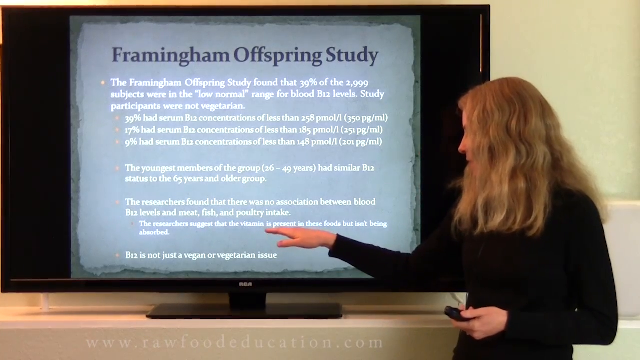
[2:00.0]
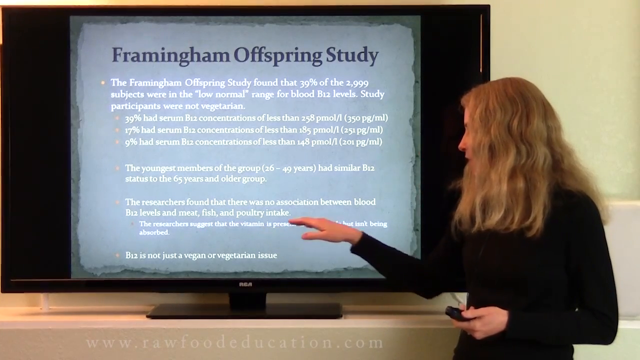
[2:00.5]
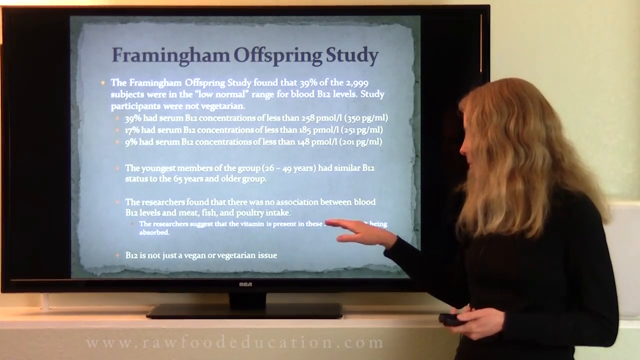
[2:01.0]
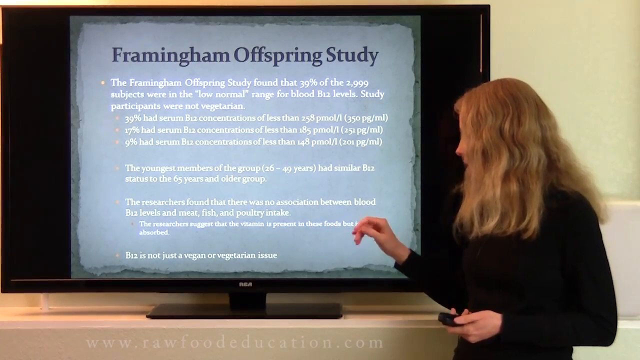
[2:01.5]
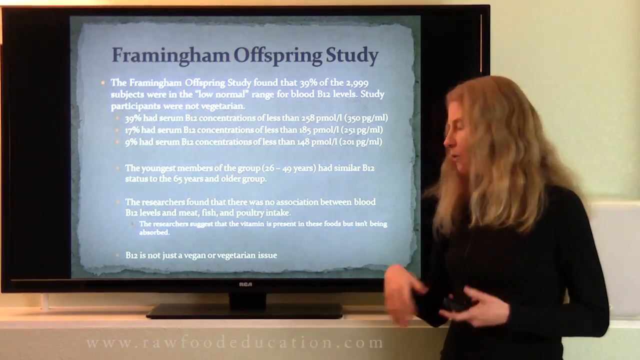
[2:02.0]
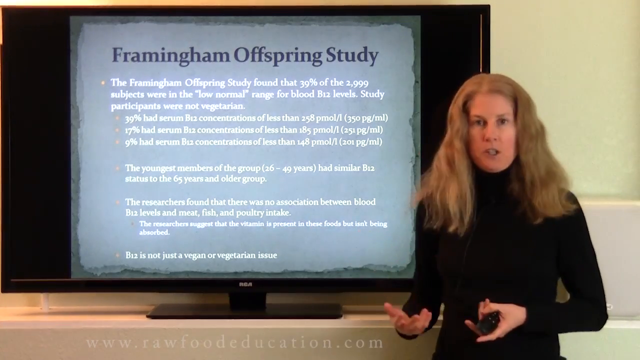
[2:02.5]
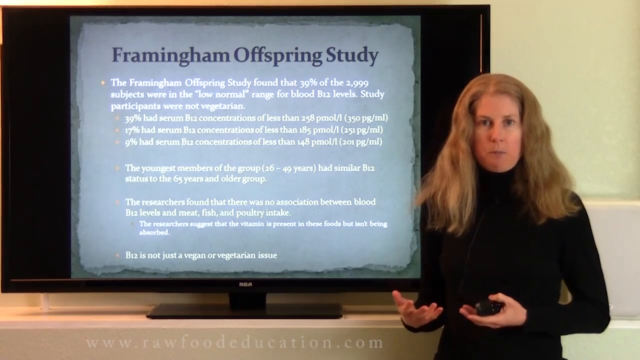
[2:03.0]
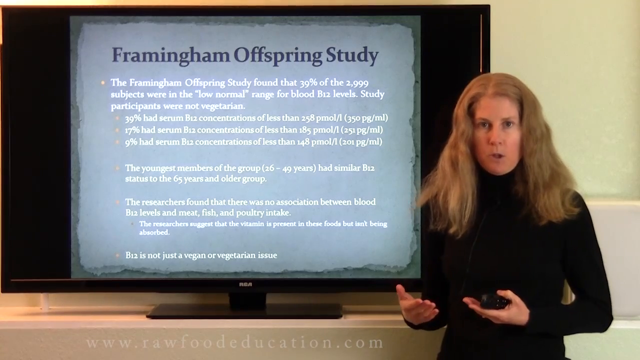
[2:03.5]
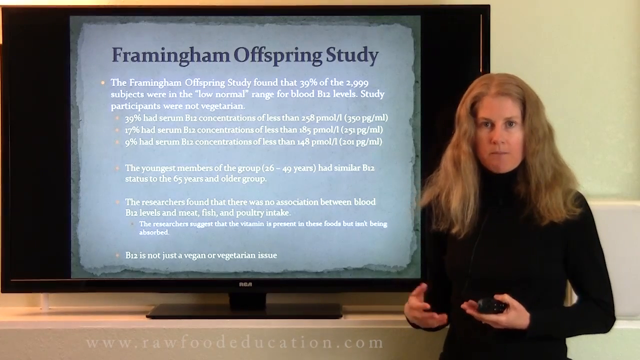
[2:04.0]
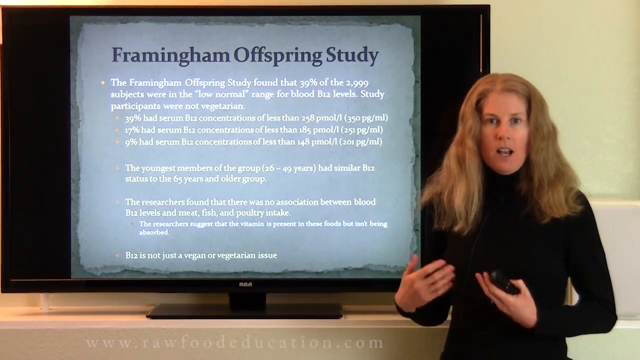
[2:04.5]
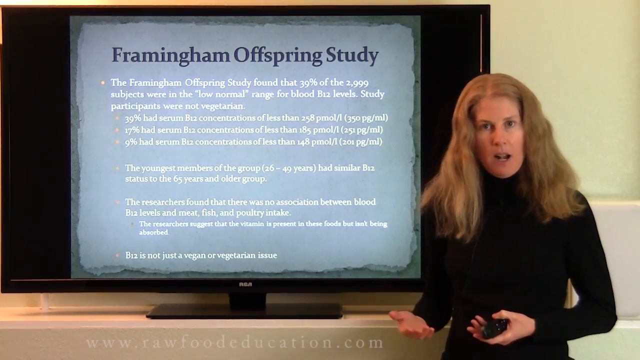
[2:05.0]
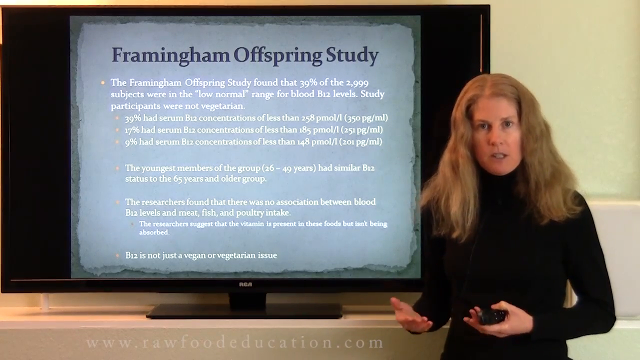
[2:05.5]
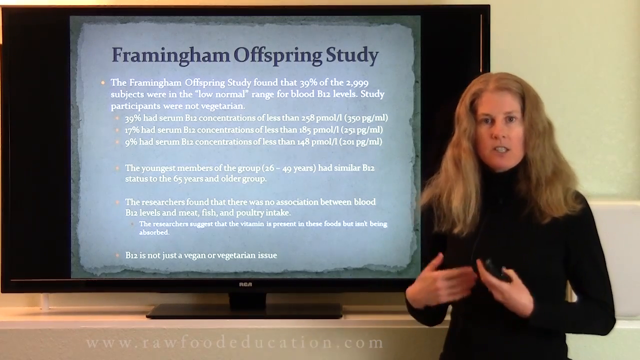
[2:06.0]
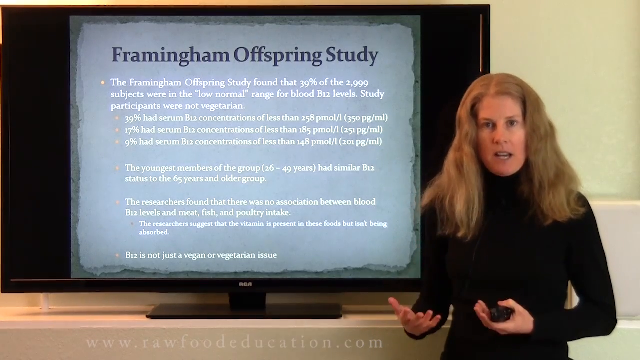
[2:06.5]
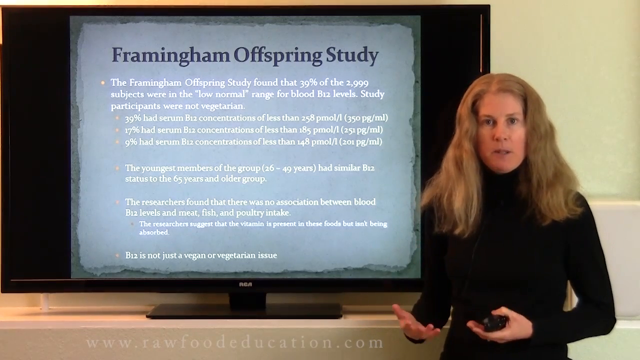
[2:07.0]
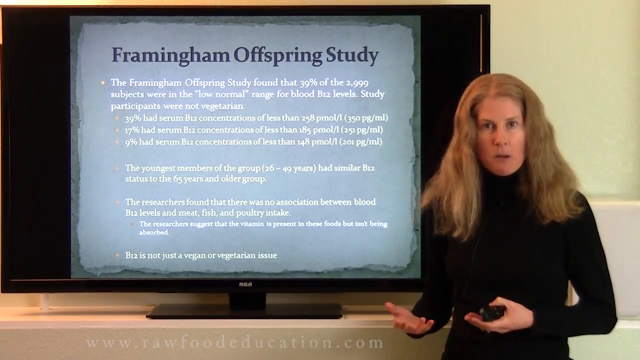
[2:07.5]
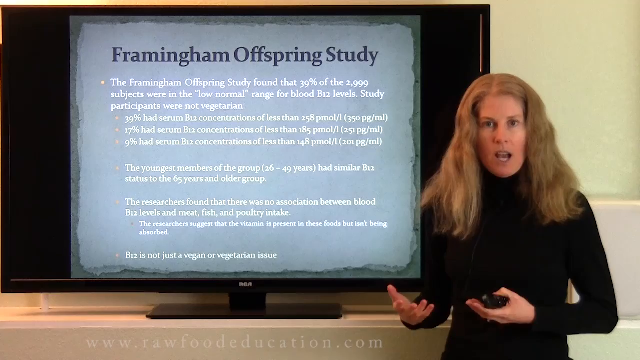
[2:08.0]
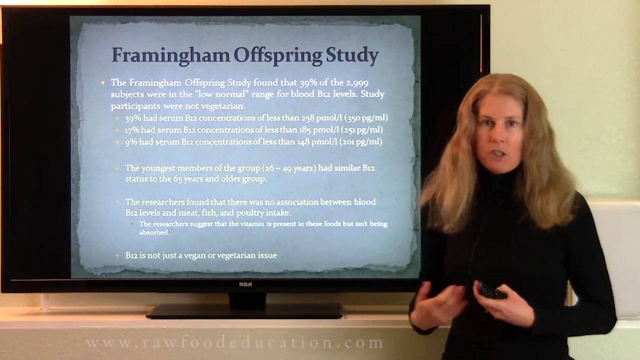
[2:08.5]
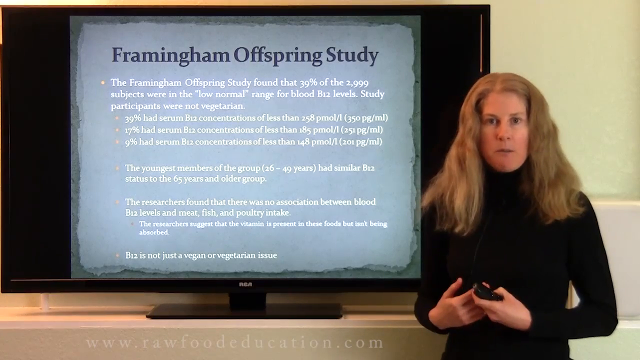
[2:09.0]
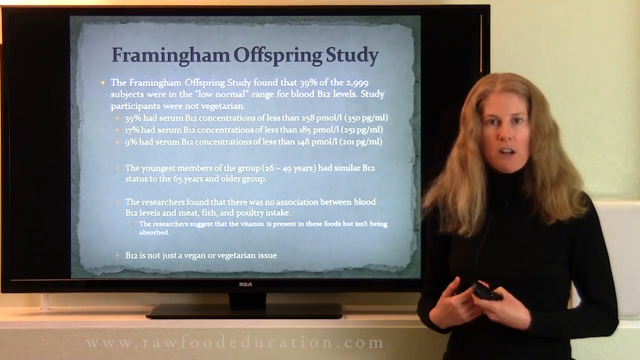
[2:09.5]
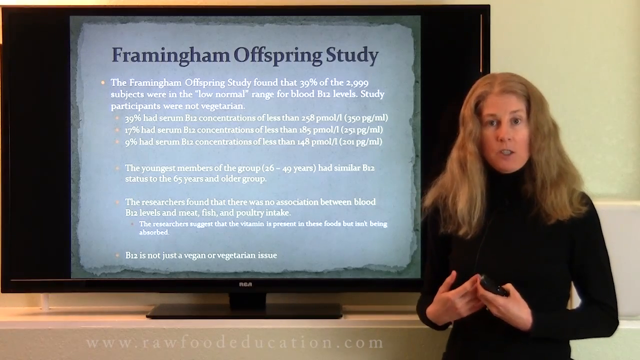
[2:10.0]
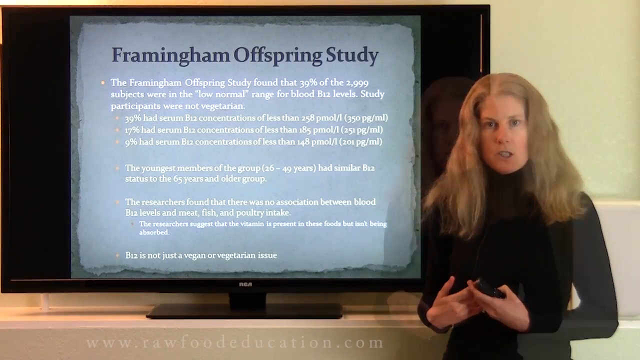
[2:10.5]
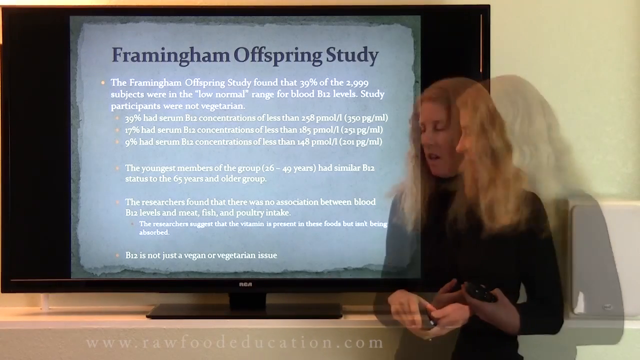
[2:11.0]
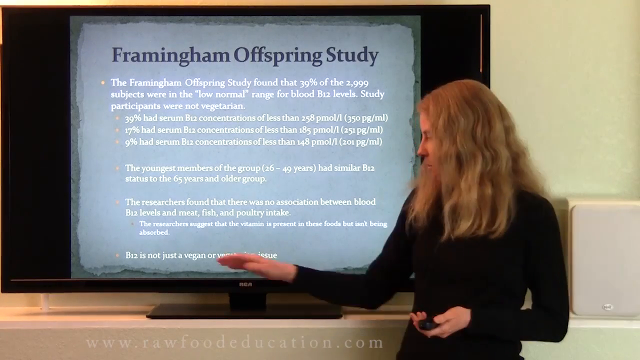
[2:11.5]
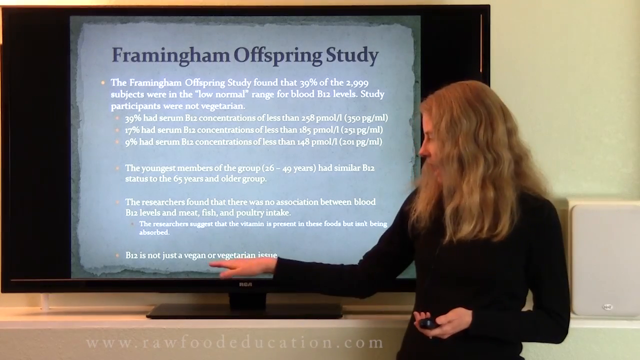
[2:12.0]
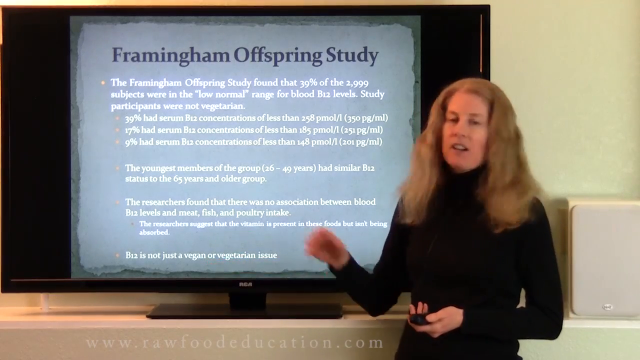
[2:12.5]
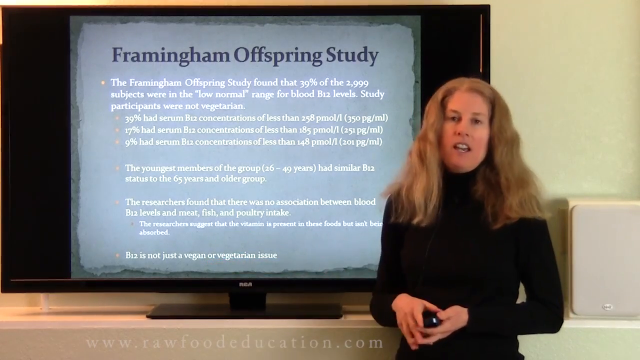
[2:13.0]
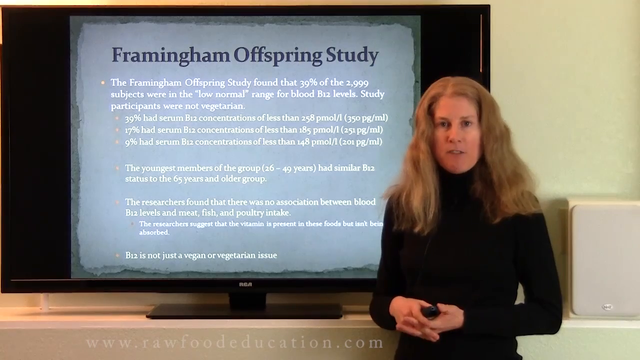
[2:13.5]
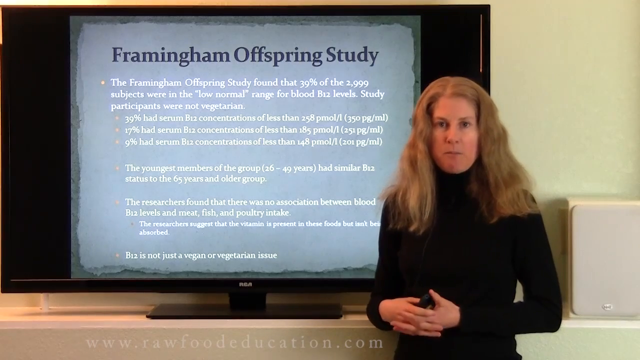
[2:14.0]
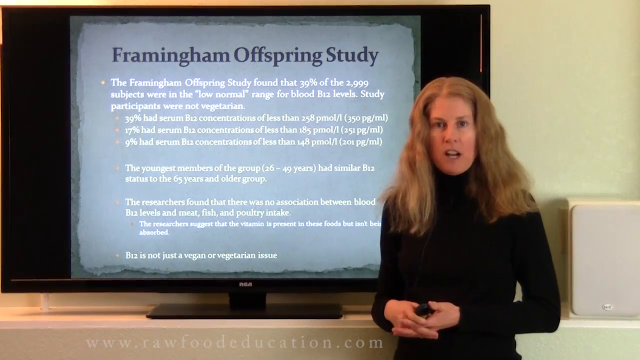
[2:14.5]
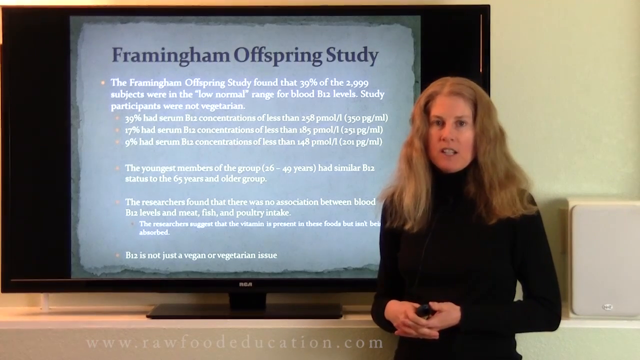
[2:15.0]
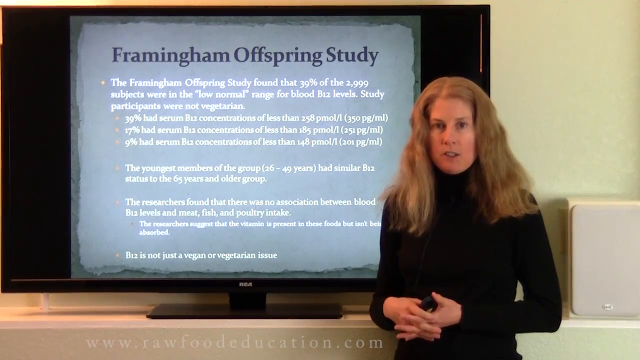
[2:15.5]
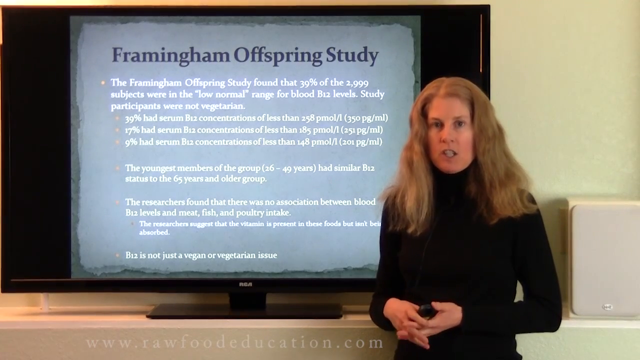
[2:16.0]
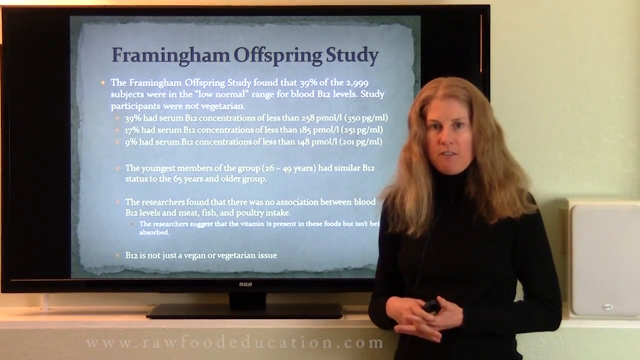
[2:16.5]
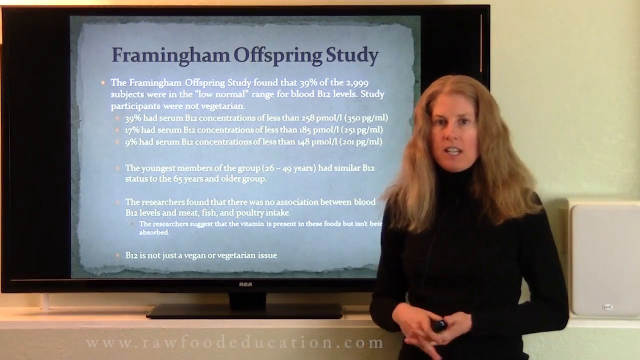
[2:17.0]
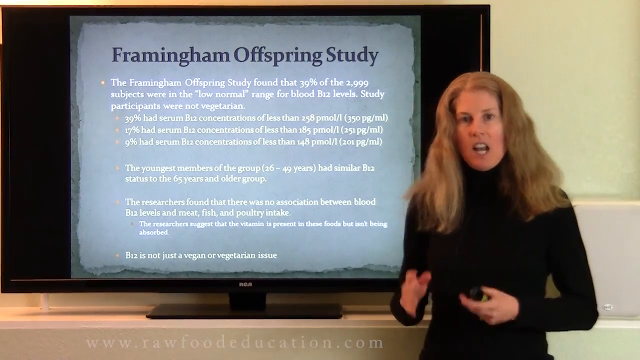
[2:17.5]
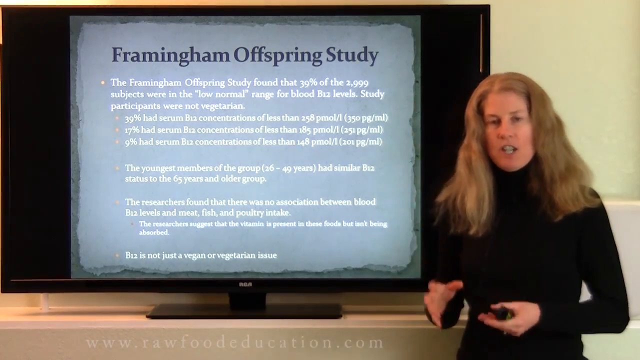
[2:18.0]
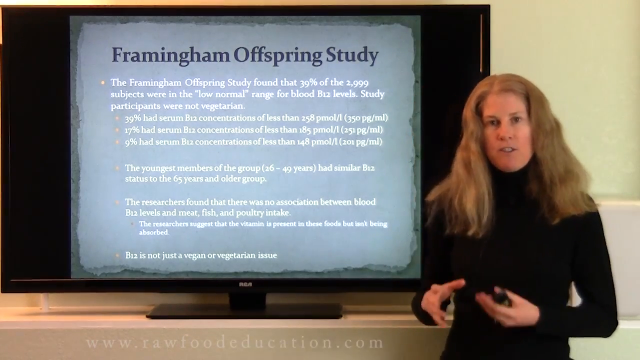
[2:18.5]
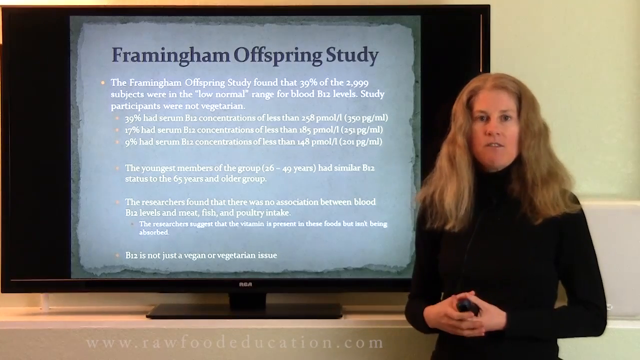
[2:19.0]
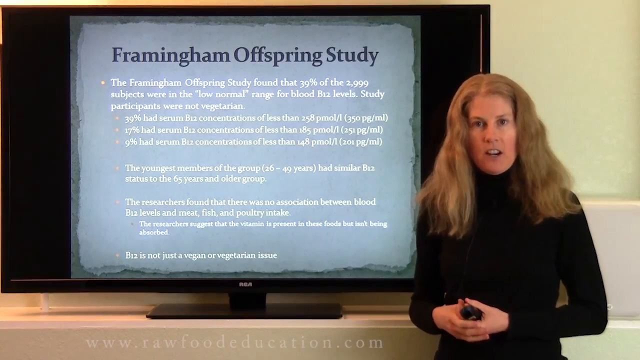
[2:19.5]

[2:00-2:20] The woman, in a black shirt, with dirty blonde hair, Caucasian, probably around 40, holds a remote and points at the Framingham Offspring Study screen with her right hand, using hand motions as she talks. The view then moves to the text at the bottom portion of the screen; the setting stays the same, but the video transitions through a sort of translucent screen and back to her in the same setting, explaining the information at the bottom of the kind of static text page.